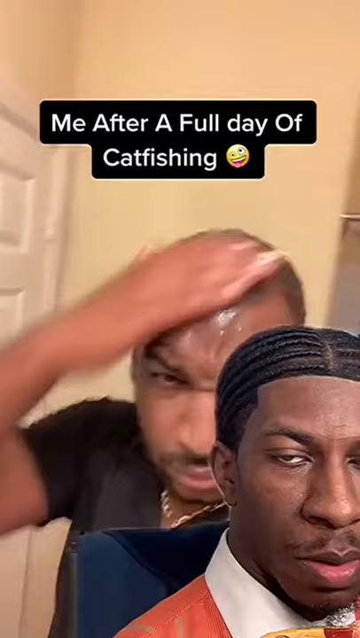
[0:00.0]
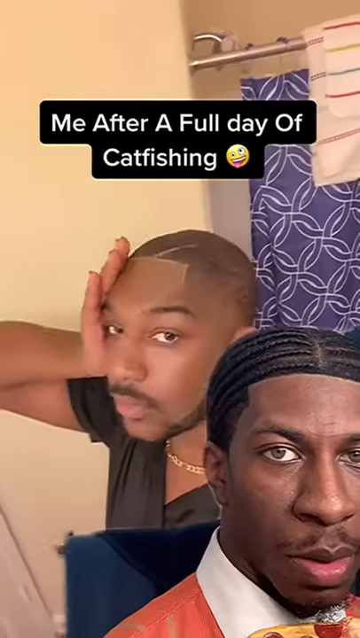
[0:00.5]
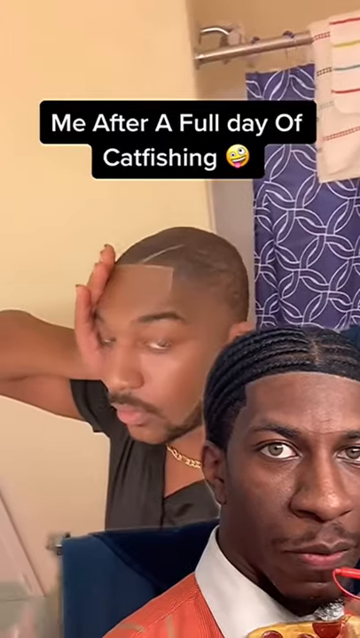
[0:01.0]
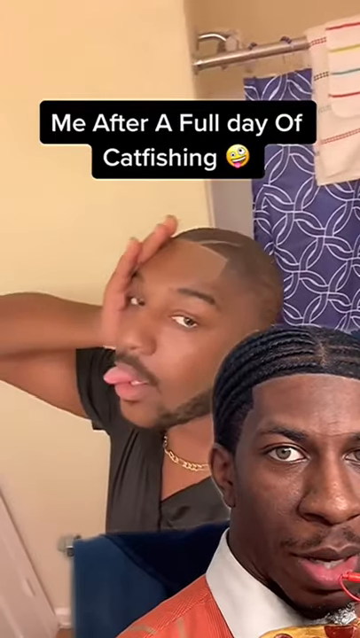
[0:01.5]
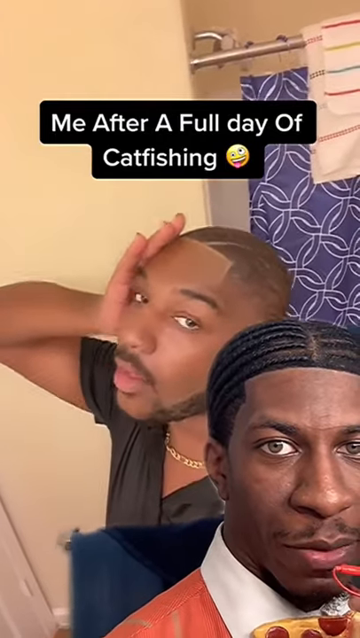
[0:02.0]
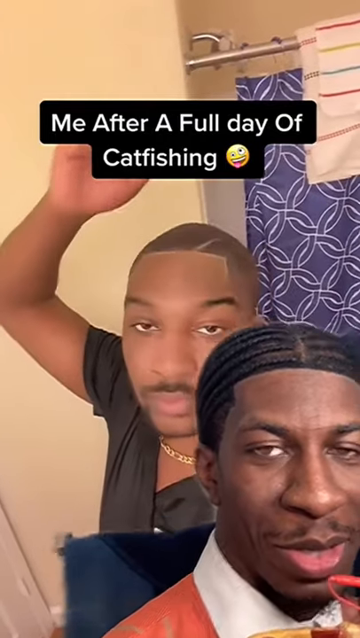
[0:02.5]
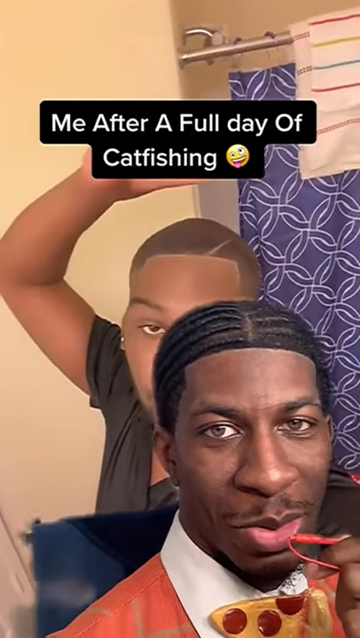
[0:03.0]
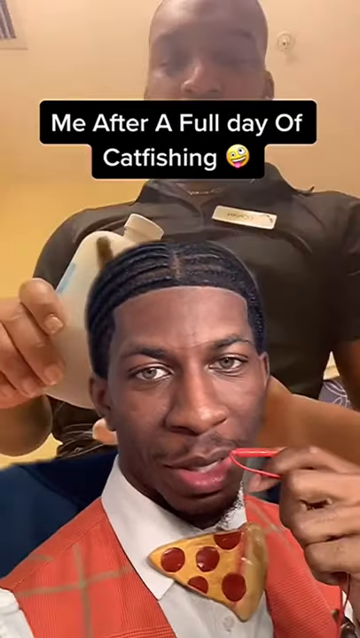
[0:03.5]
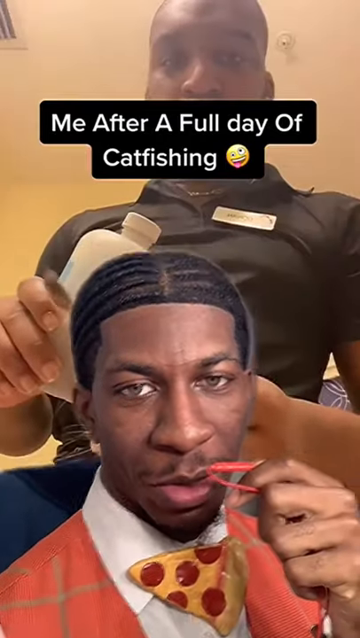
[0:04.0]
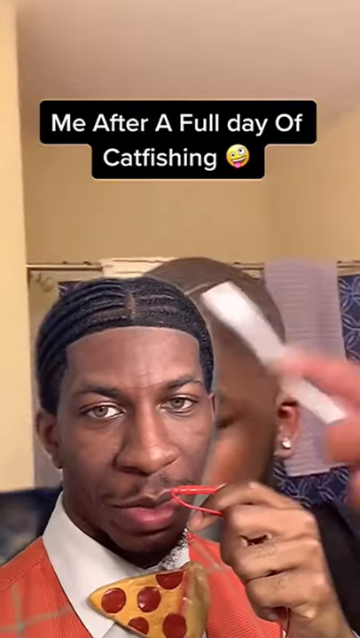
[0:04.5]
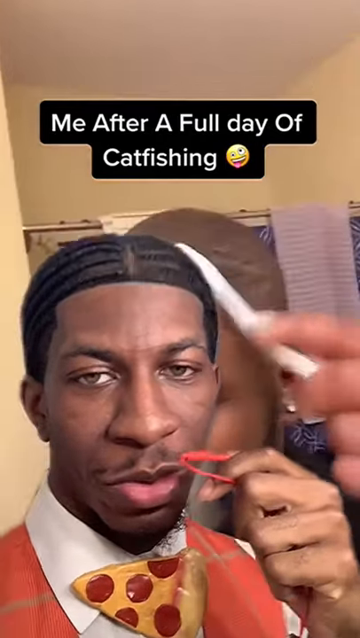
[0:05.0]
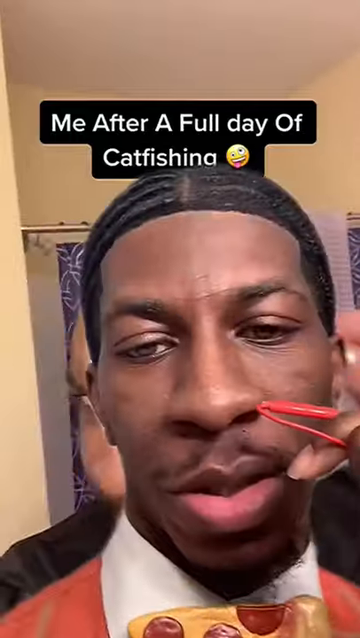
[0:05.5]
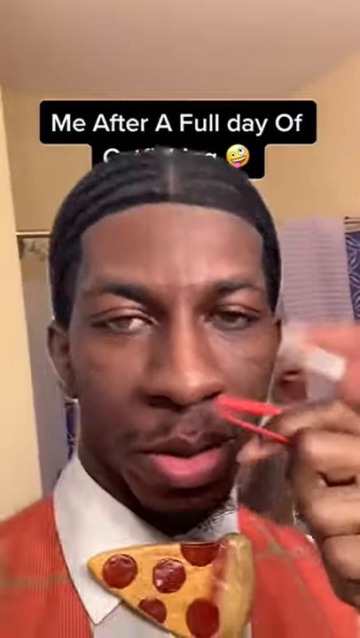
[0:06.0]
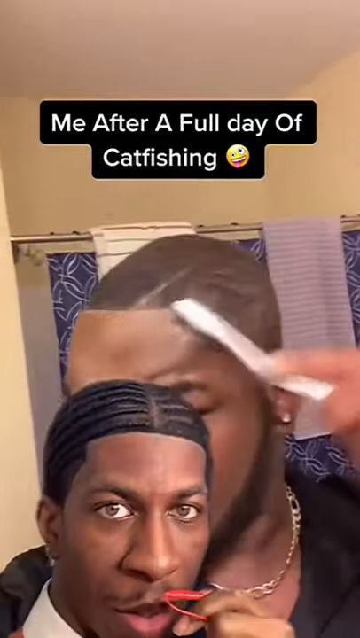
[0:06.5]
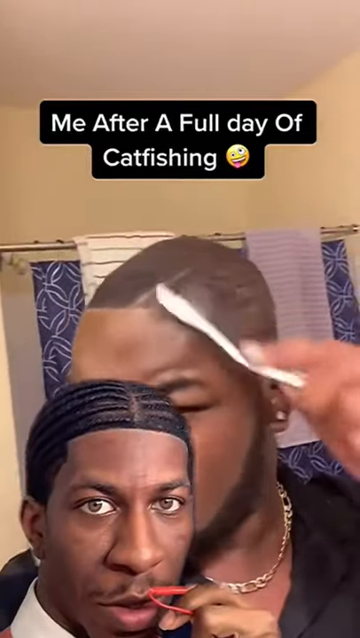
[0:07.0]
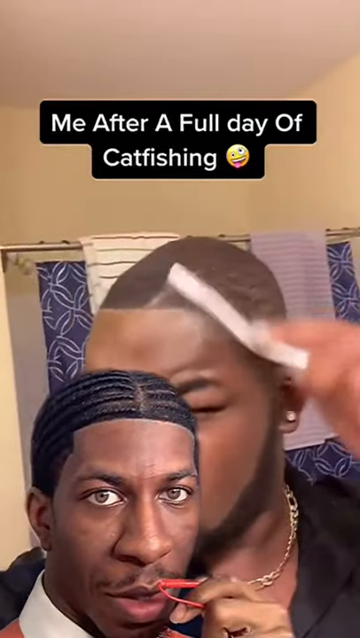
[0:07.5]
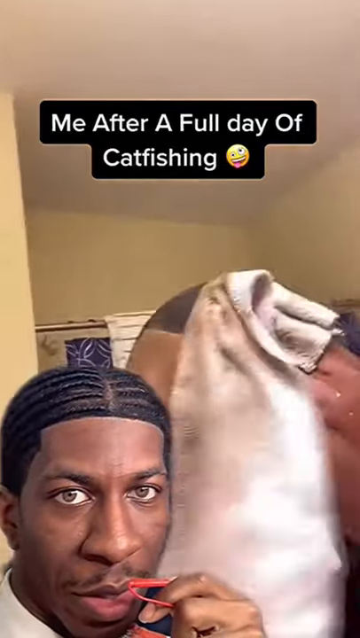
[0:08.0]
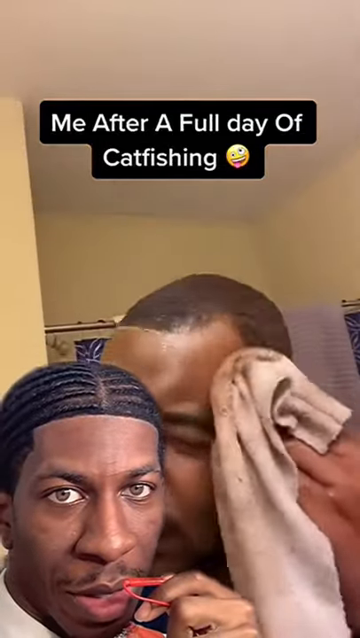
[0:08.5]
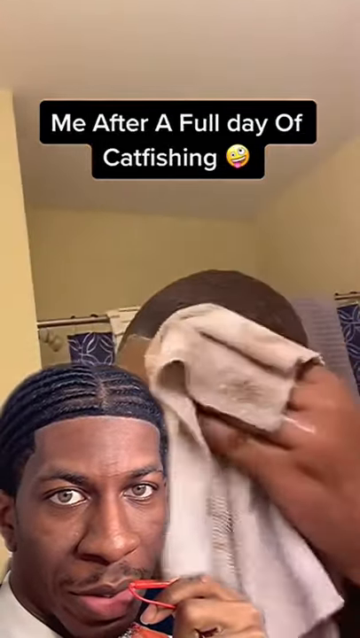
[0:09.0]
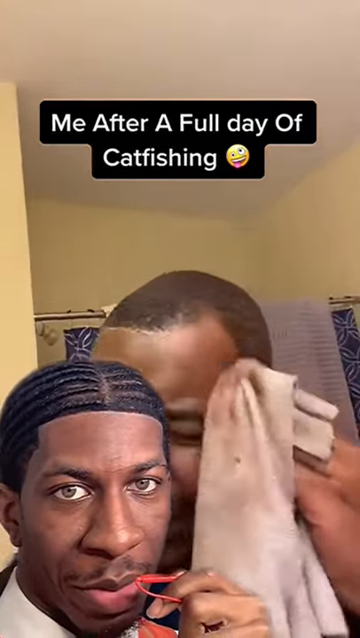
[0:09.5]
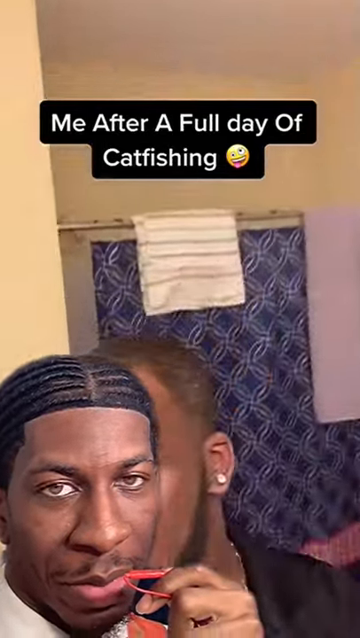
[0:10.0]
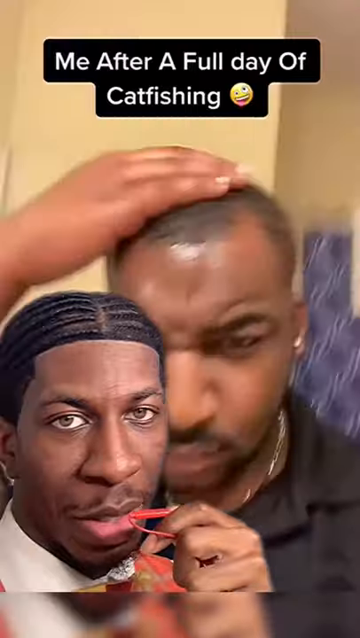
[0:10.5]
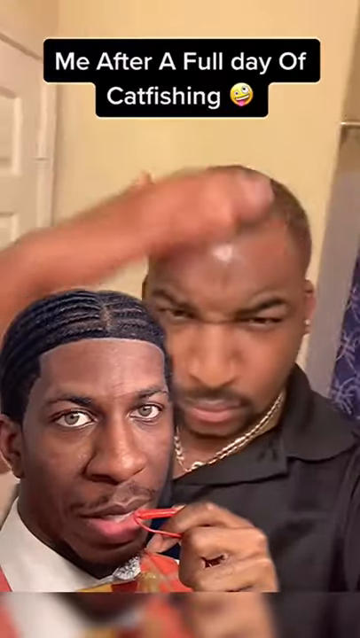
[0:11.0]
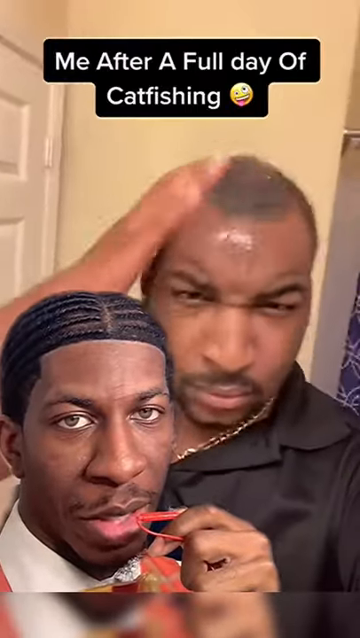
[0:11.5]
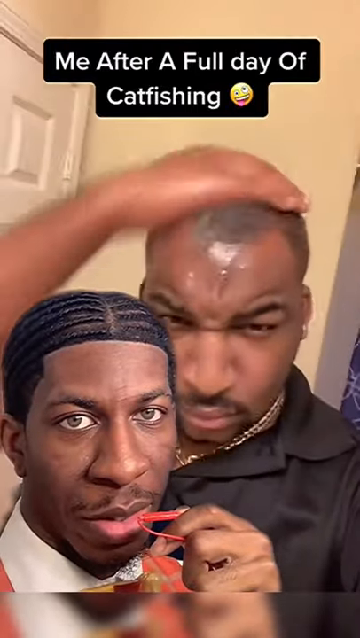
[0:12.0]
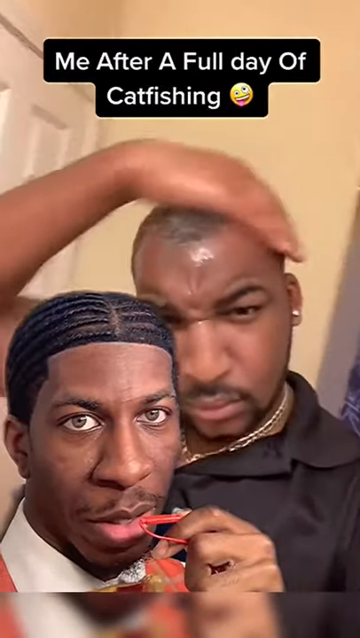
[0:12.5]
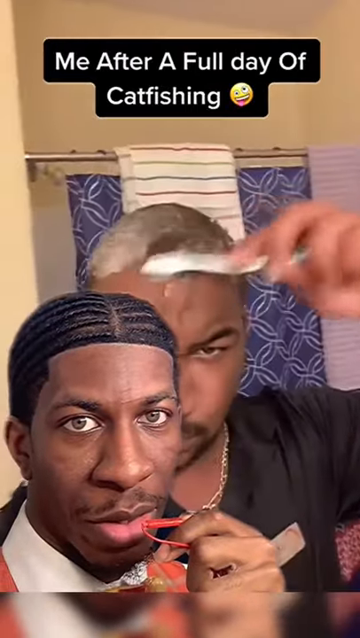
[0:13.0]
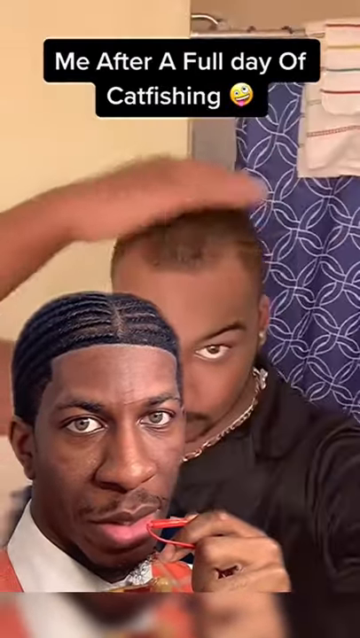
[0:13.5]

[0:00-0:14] The video appears to show one person reacting to another. The original video in the background has the text "me after a full day of catfishing" with a laughing emoji. It shows a young African American man with a nice haircut. A second person is superimposed on the video: he has braided hair parted down the center and is holding what seems to be a red clip up to his mouth, though it is unclear what it is. He wears a white collar shirt with a red, almost orange vest and a bow tie that looks like a pizza. The man in the background wears a black shirt and a name tag. He is in his bathroom, wiping what looks like paint off the front of his hairline, revealing that his hairline is actually receding a bit. The "catfishing" apparently refers to him presenting a full head of hair when he is just painting it on. He appears to use a toothbrush, rubbing alcohol and a rag to wash it off.